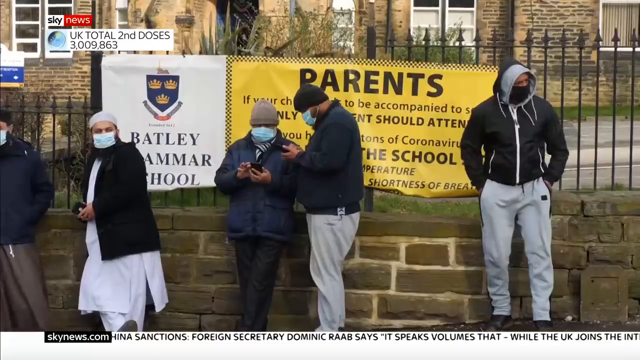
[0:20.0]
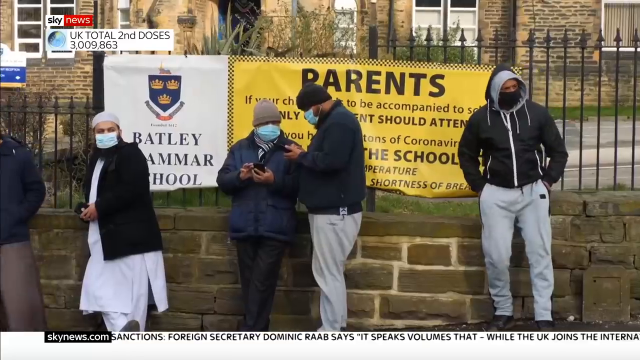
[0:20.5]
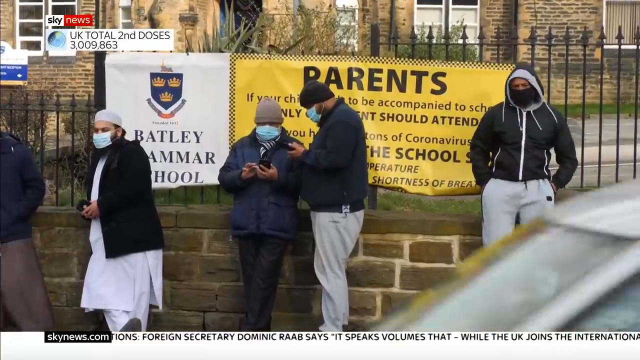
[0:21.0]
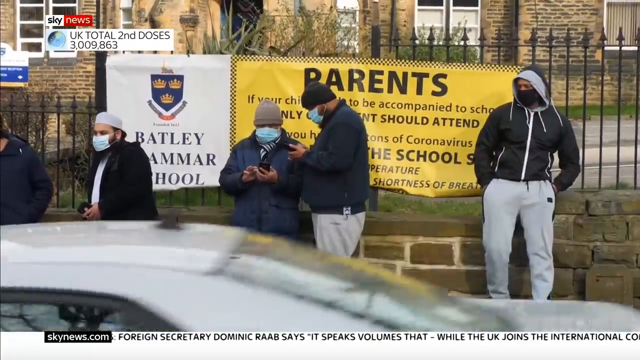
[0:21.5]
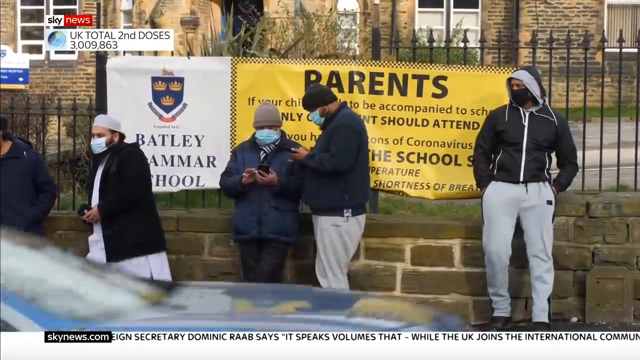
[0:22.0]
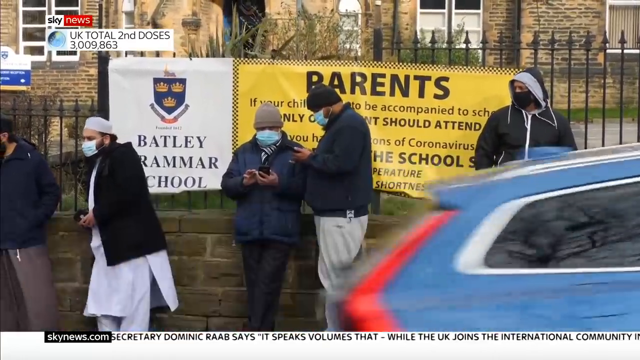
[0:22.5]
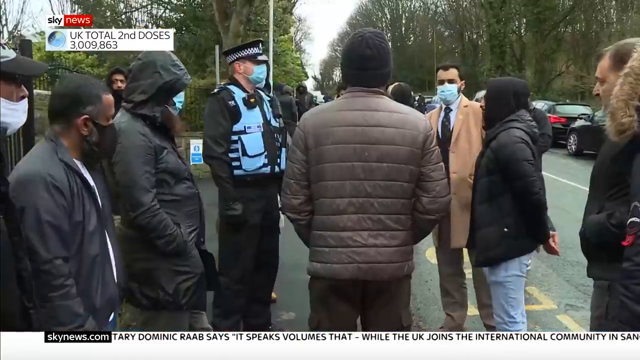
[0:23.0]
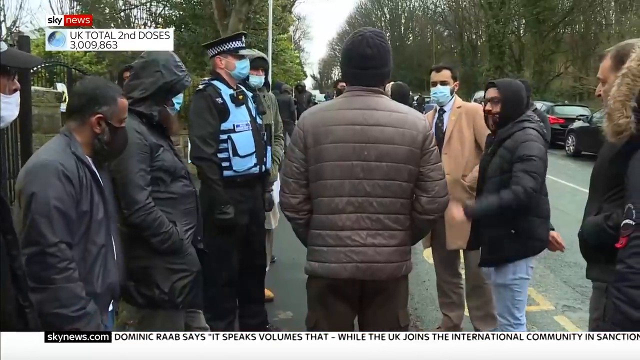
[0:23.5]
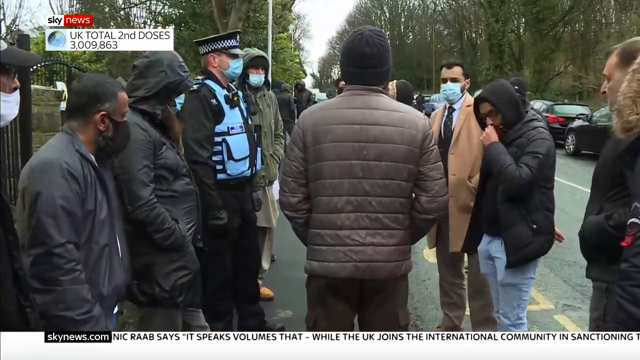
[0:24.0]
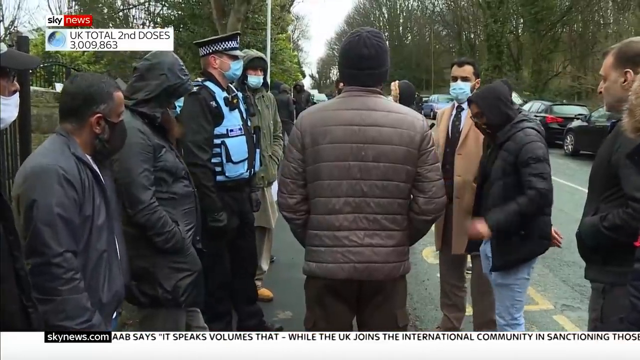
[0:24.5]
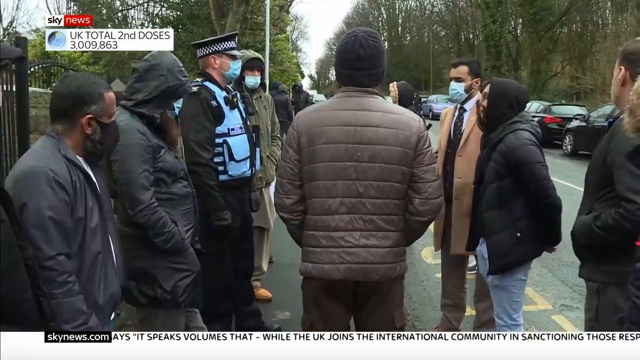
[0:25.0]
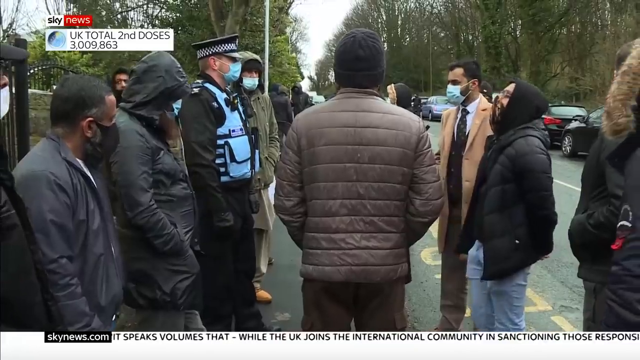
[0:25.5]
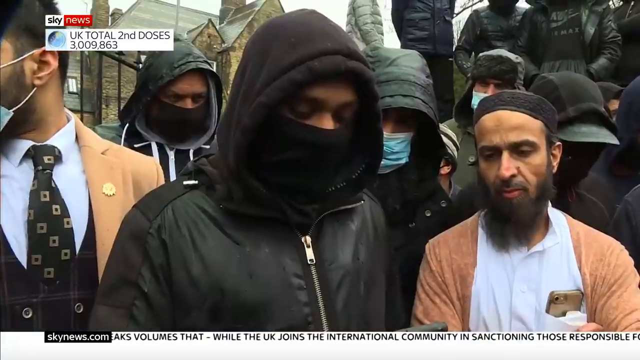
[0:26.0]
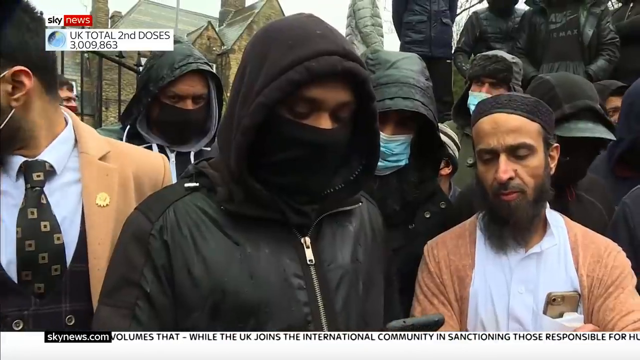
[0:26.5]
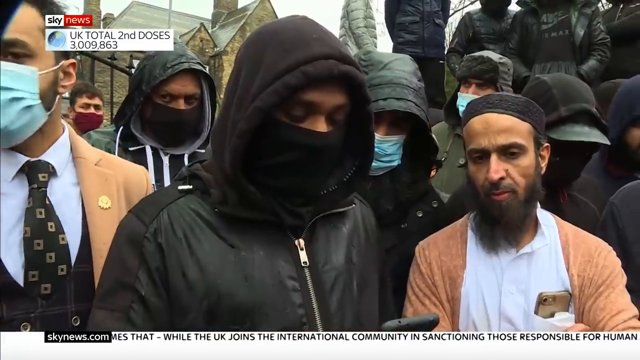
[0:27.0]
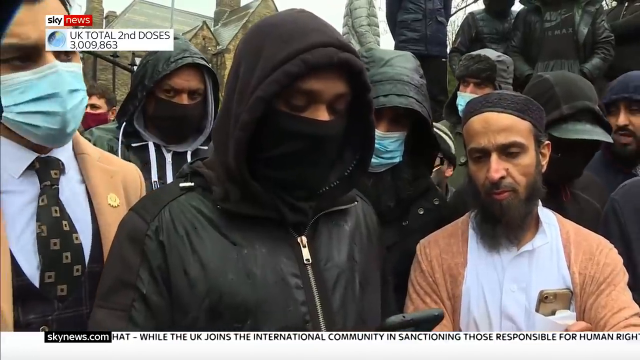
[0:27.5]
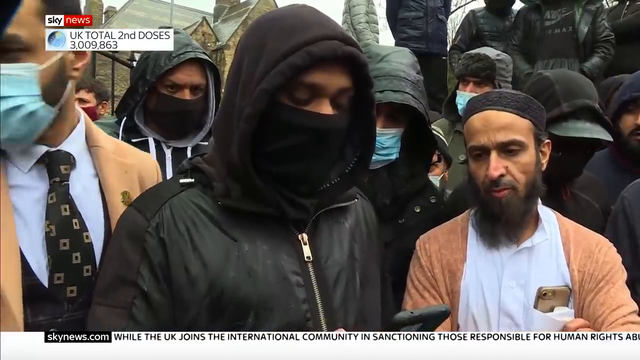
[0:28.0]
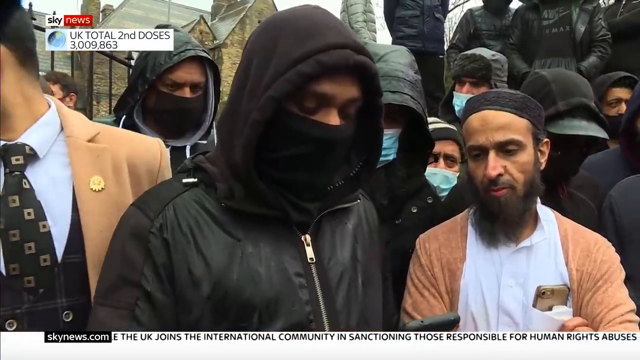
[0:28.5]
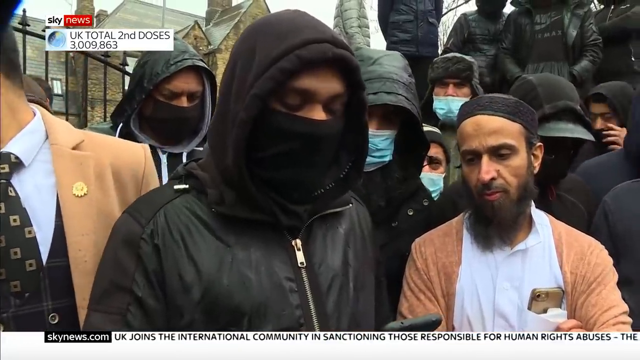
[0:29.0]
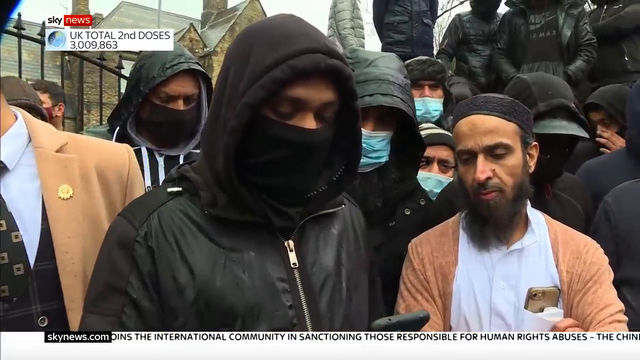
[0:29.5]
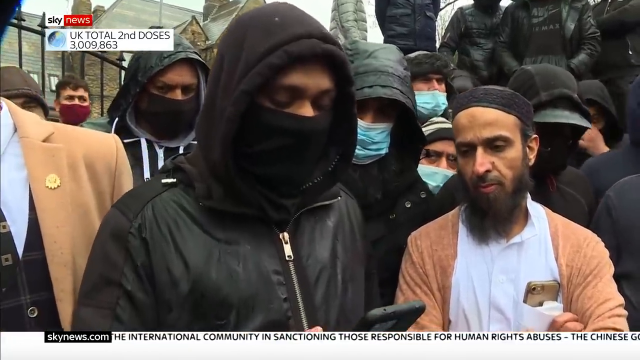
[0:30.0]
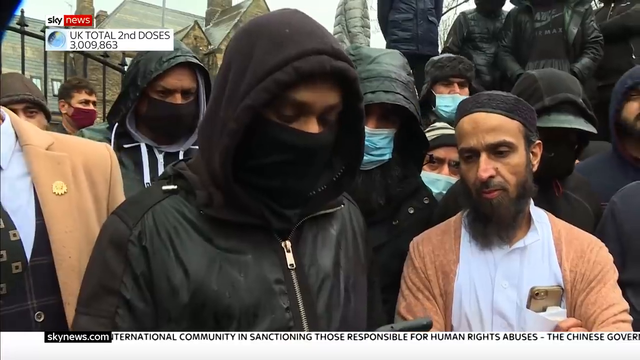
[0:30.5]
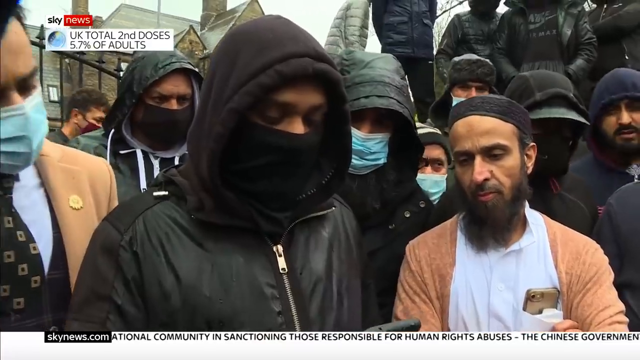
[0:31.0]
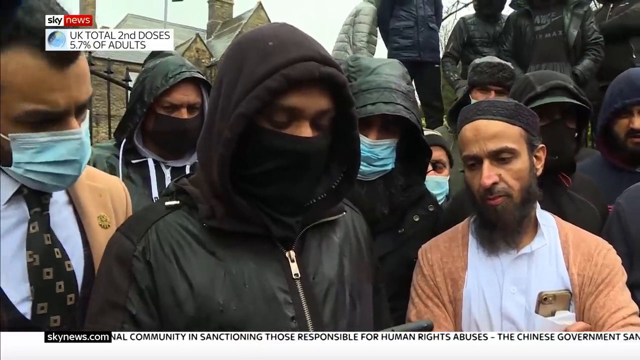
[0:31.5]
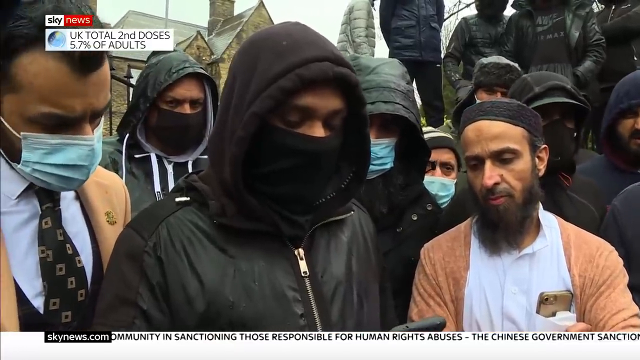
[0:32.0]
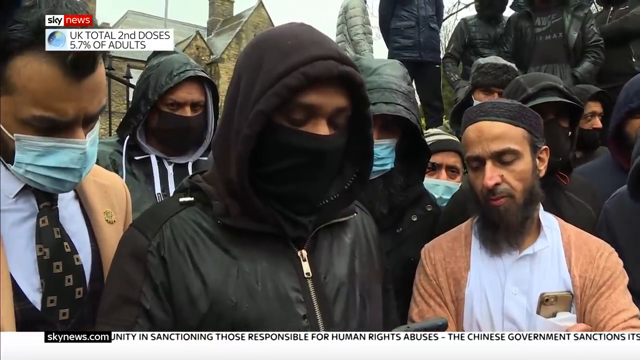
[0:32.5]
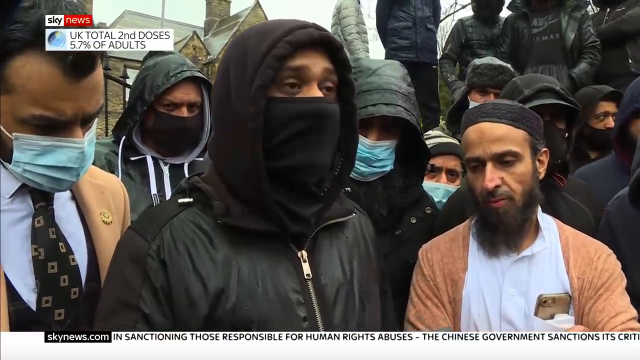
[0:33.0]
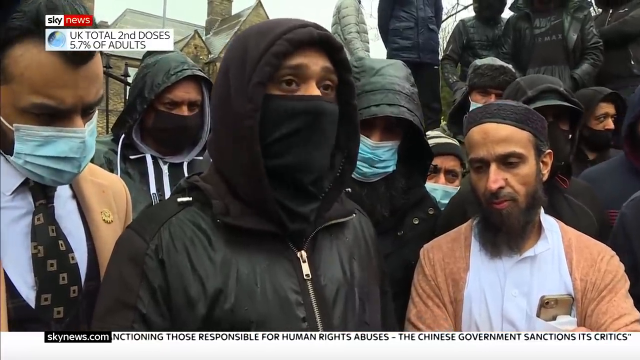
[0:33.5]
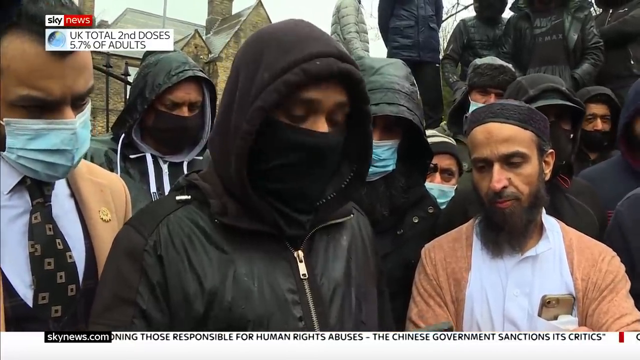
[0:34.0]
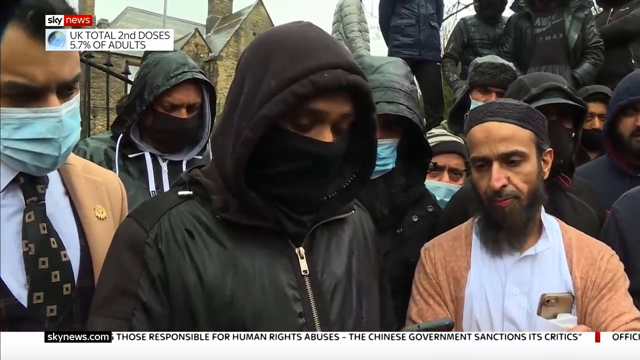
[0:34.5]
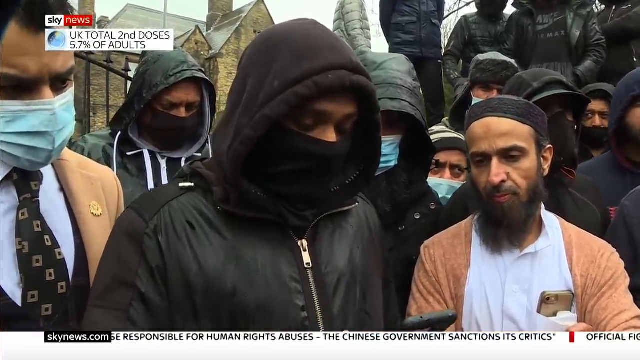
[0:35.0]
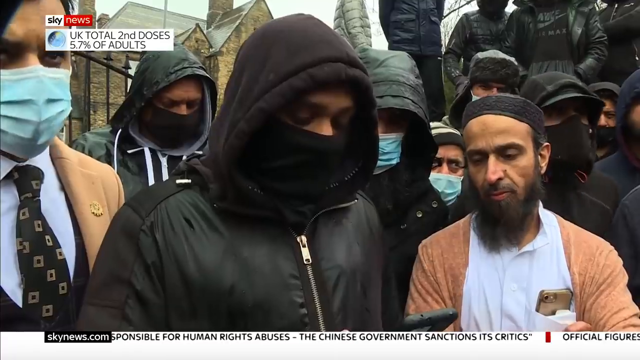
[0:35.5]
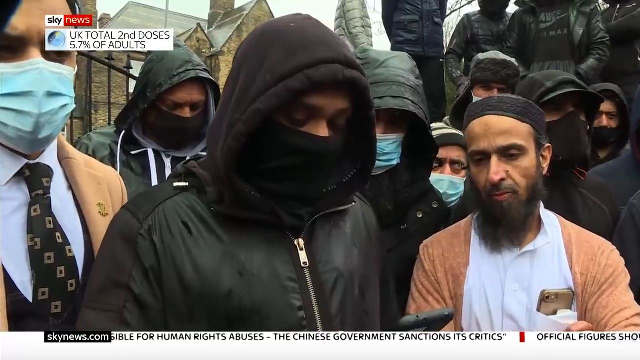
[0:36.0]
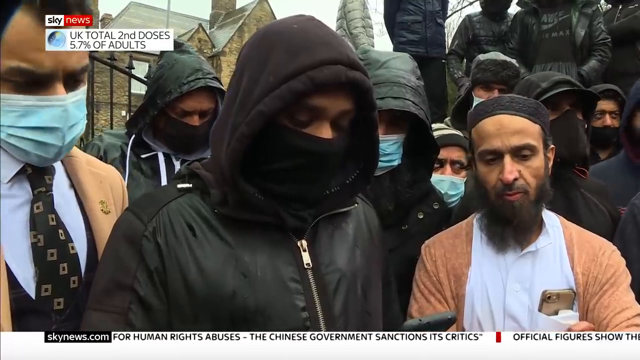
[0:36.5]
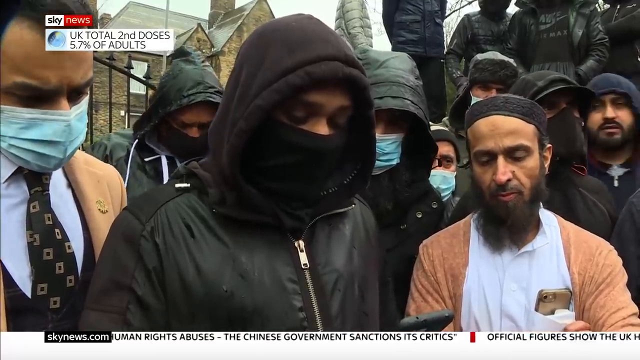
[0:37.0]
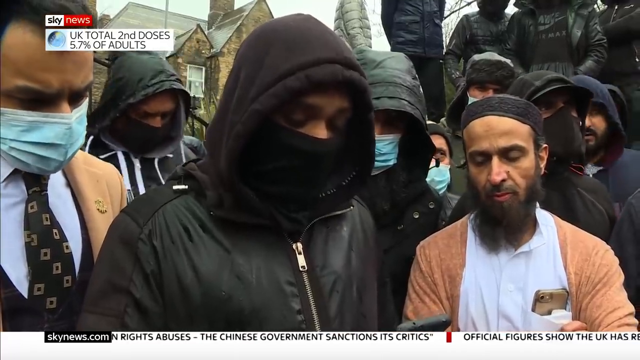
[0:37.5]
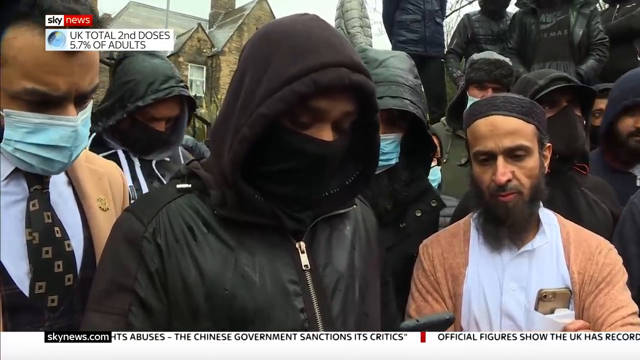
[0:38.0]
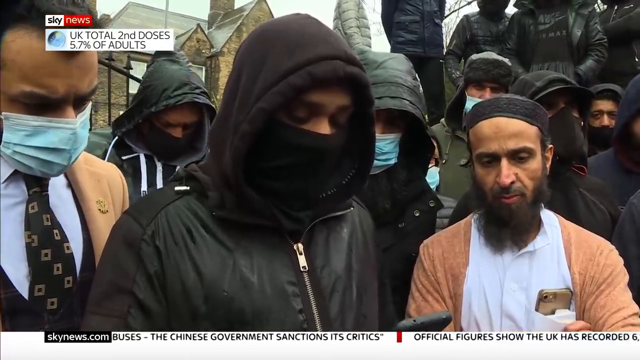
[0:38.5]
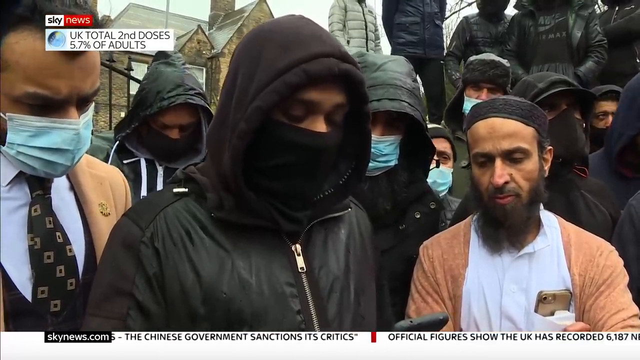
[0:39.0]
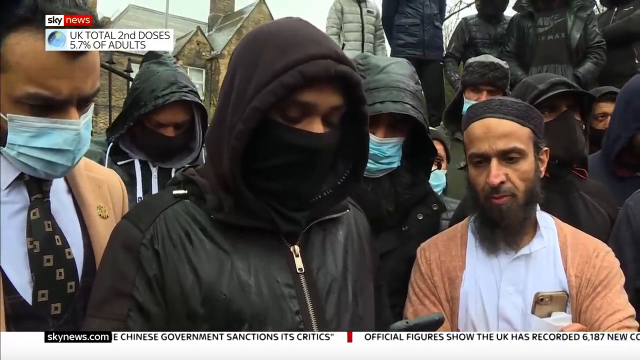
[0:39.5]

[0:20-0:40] The Sky News broadcast continues, showing "total UK second dose 3,986,003". Bartley school is in the background, with parents and another banner that appears to be dedicated to the parents. People stand in a line wearing masks and heavy clothes; some are Arab and others are of another ethnicity. A school-like feature is in the background and vehicles pass by. A policeman talks to a group of people. Some people wear masks and others do not. One person looks at a phone, doing something on it. Everyone wears heavy clothes, and it seems to be cold. Text then shows "UK total second dose 5.7 percent of adults". In the background is an ancient building, apparently a school judging by the banners around it, and the person continues reading from the phone.